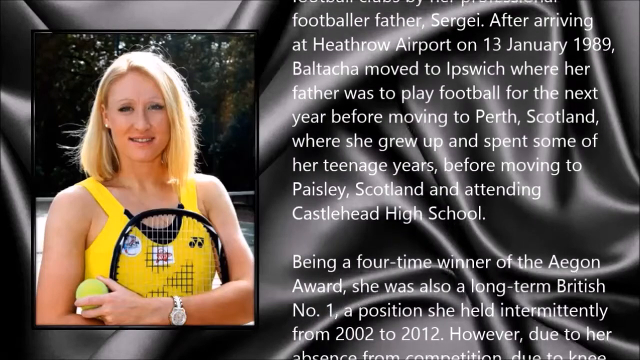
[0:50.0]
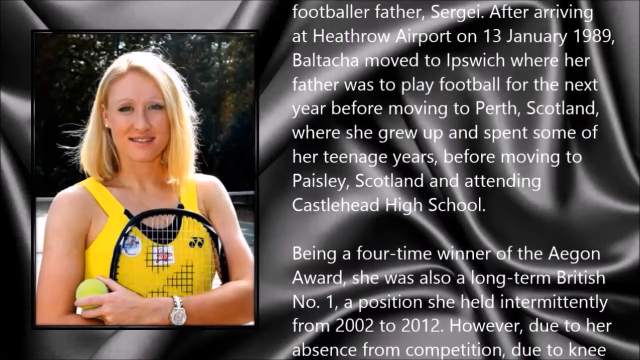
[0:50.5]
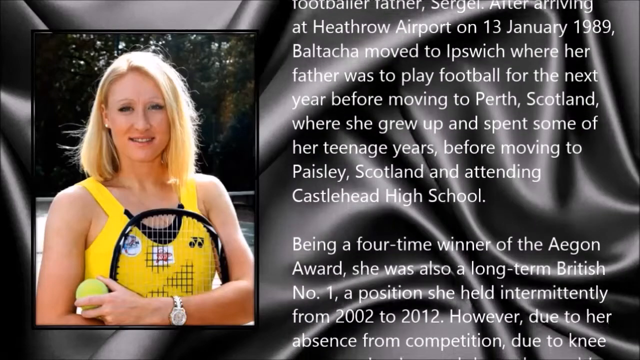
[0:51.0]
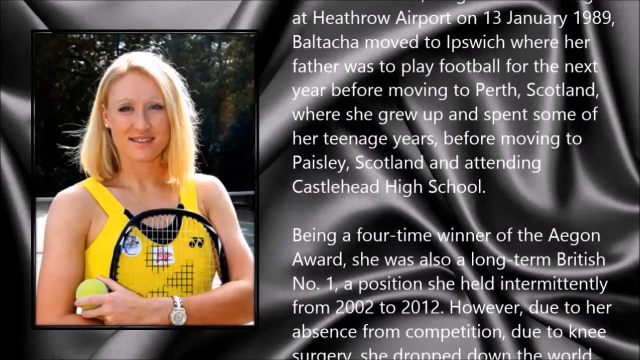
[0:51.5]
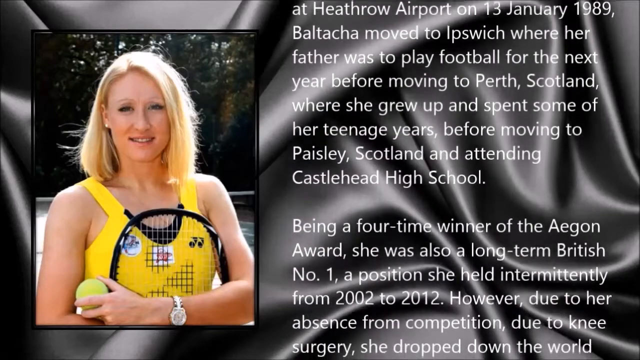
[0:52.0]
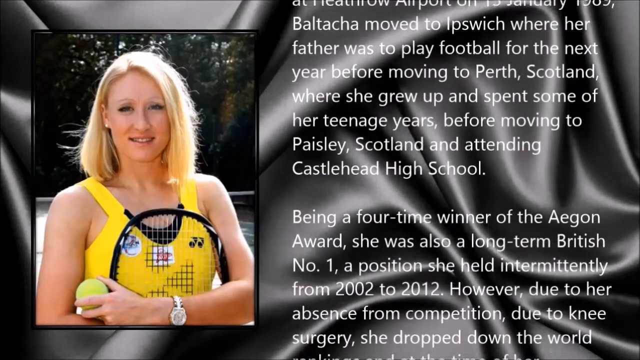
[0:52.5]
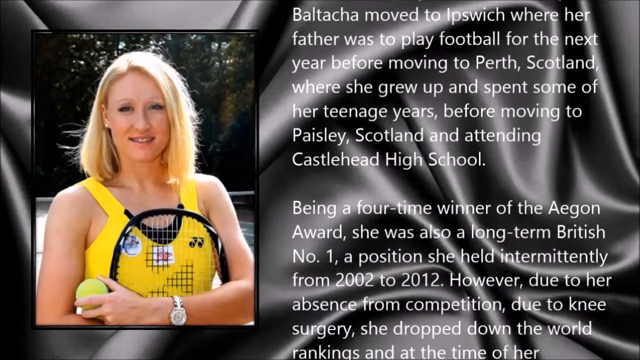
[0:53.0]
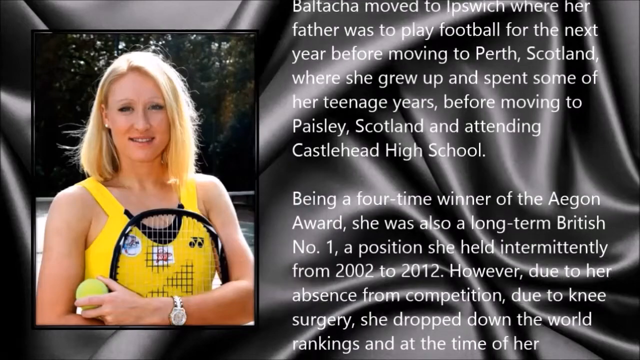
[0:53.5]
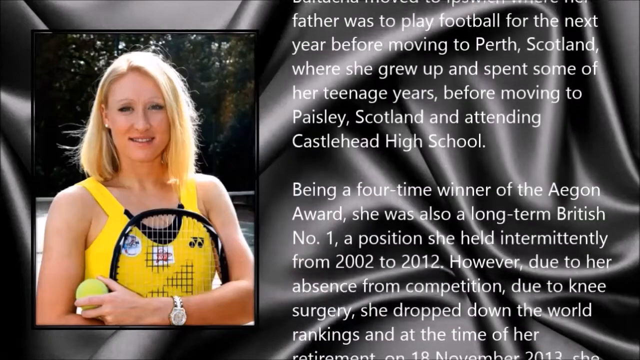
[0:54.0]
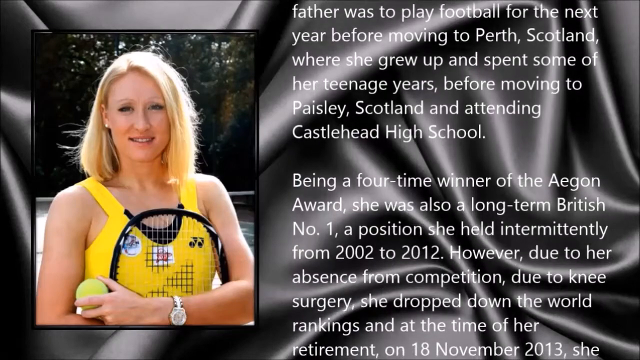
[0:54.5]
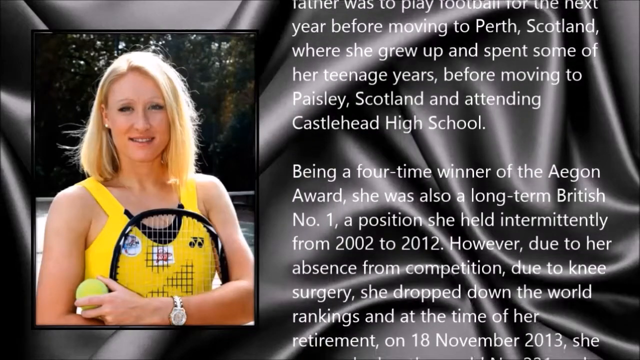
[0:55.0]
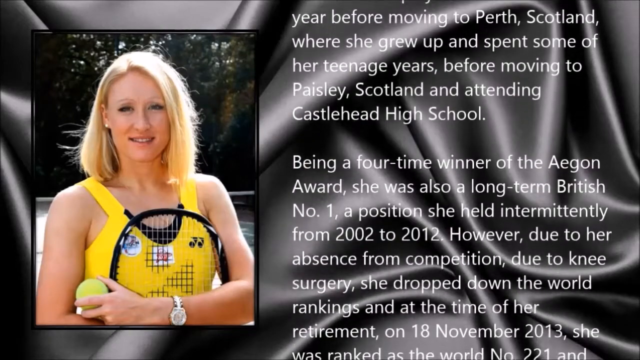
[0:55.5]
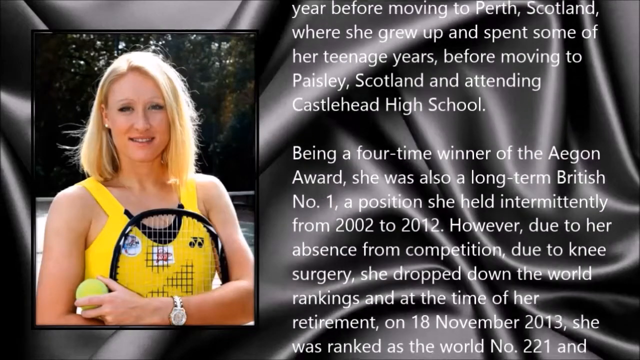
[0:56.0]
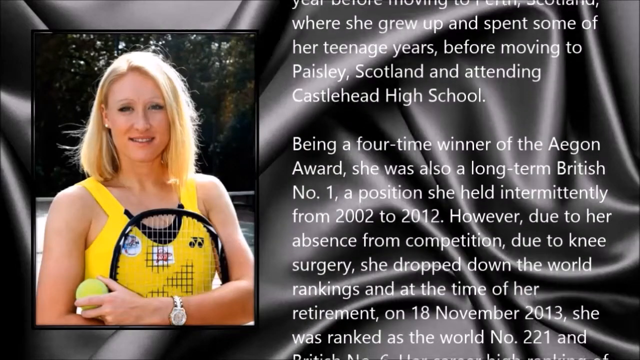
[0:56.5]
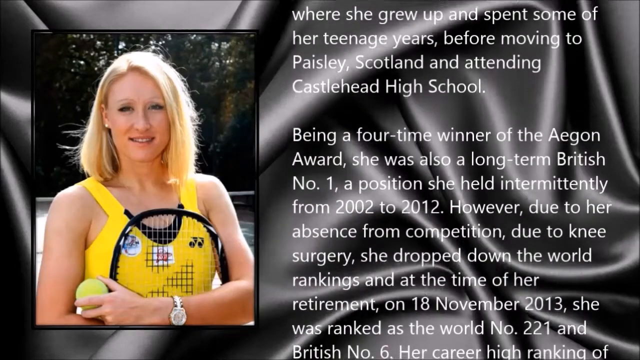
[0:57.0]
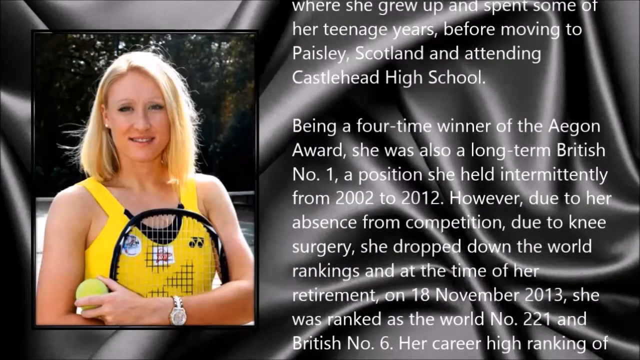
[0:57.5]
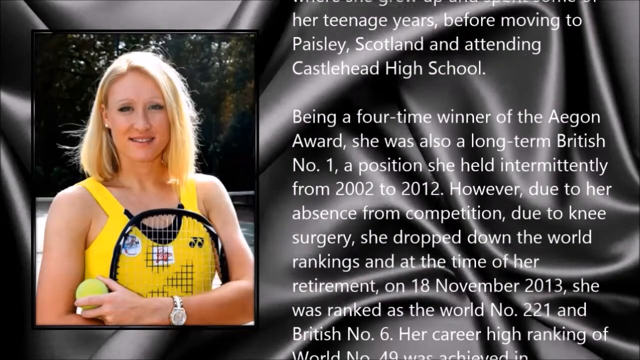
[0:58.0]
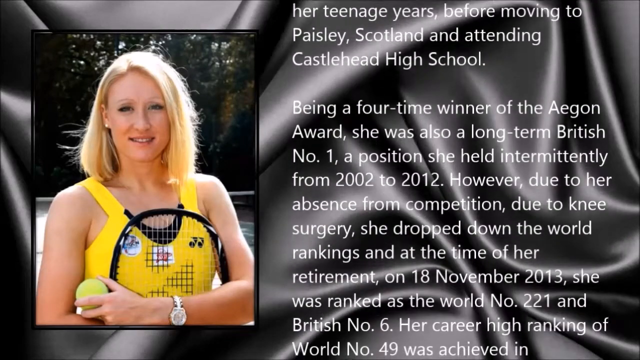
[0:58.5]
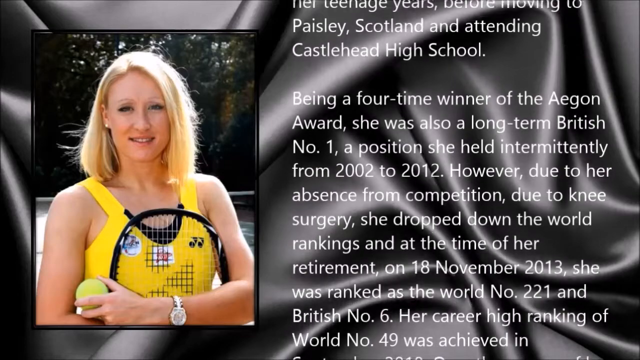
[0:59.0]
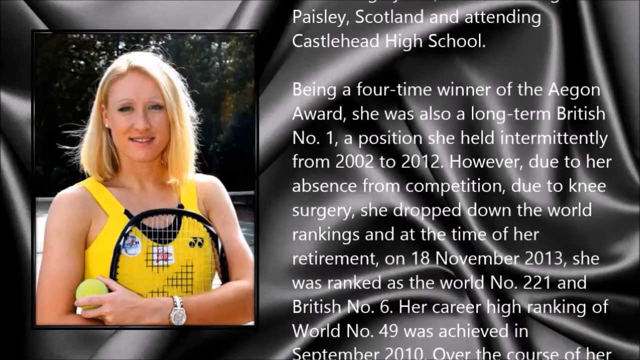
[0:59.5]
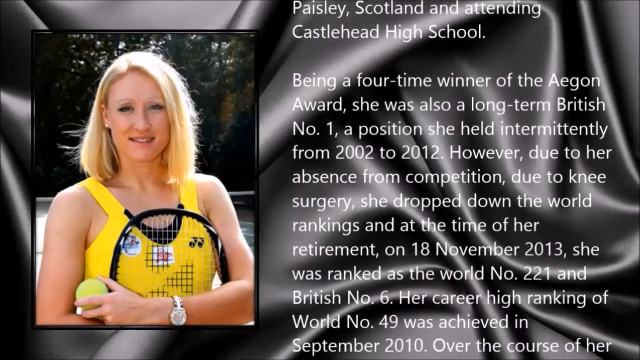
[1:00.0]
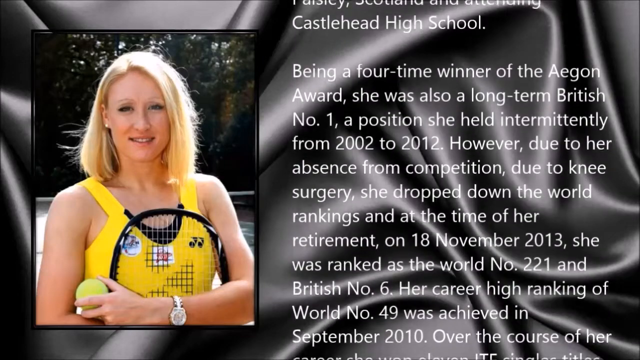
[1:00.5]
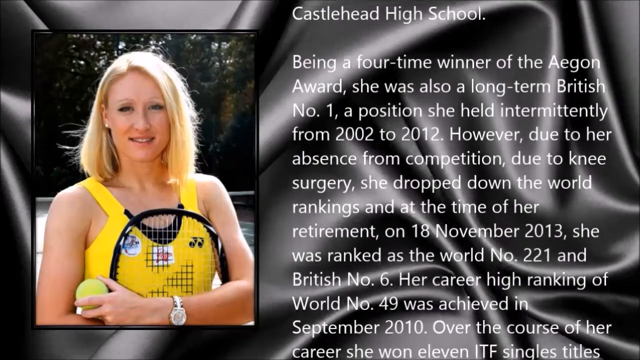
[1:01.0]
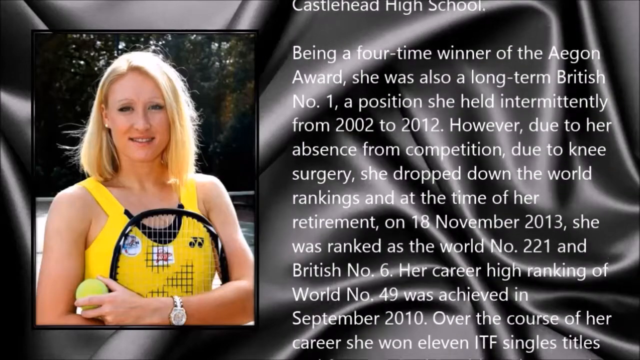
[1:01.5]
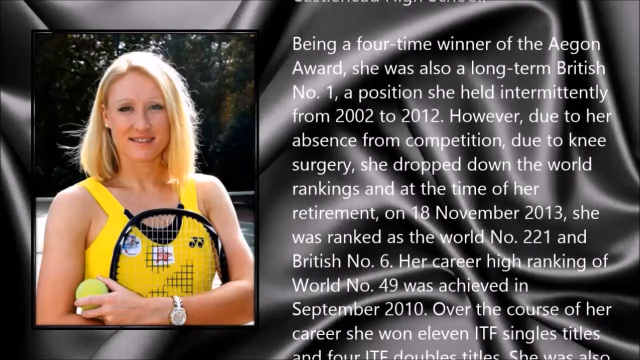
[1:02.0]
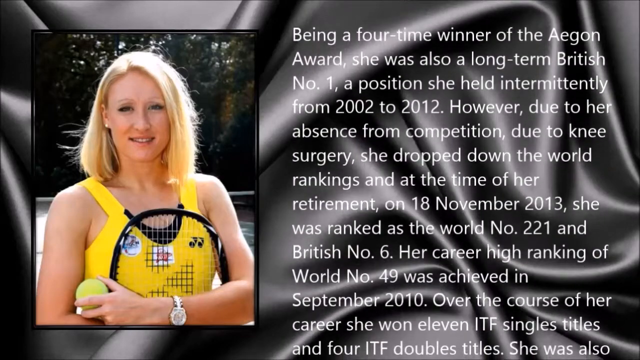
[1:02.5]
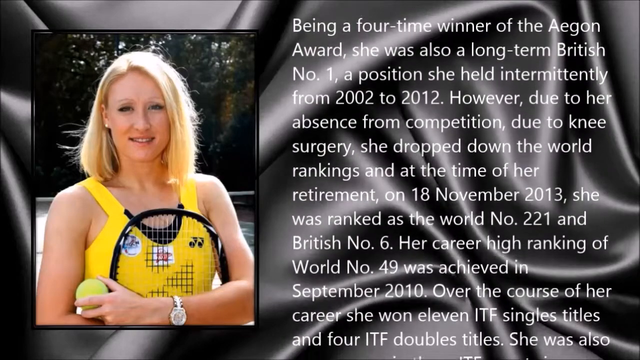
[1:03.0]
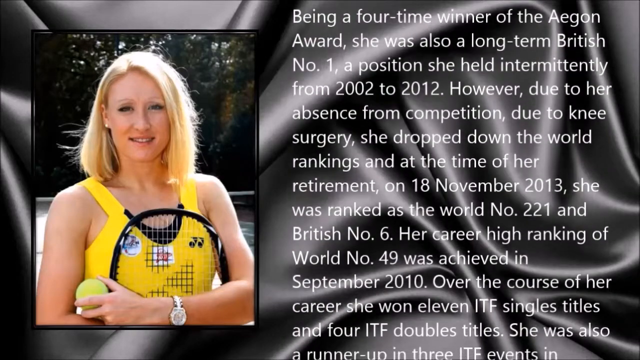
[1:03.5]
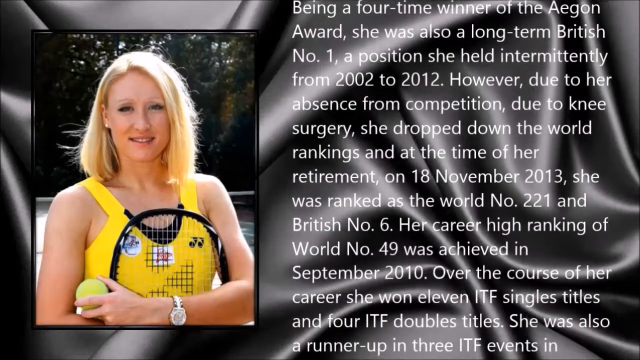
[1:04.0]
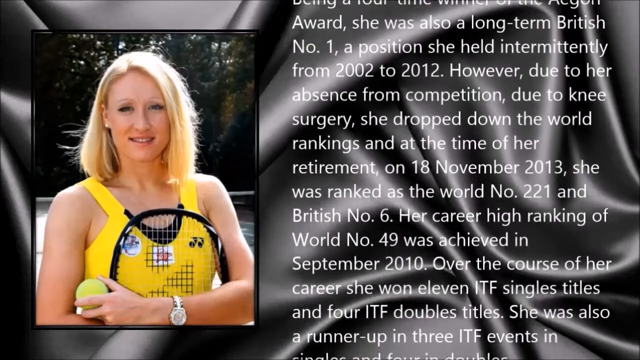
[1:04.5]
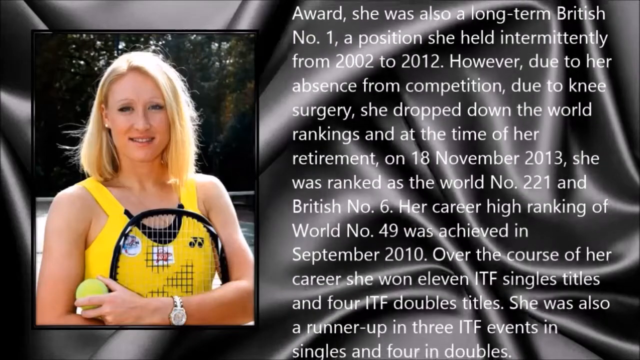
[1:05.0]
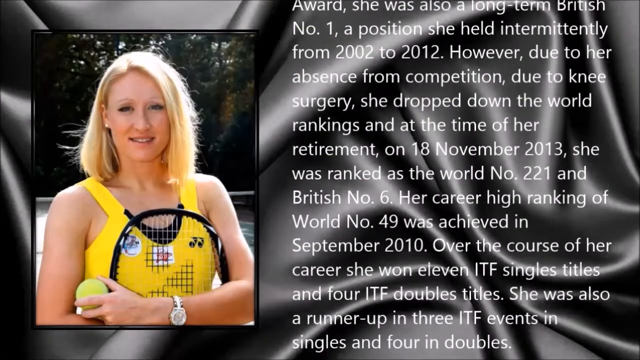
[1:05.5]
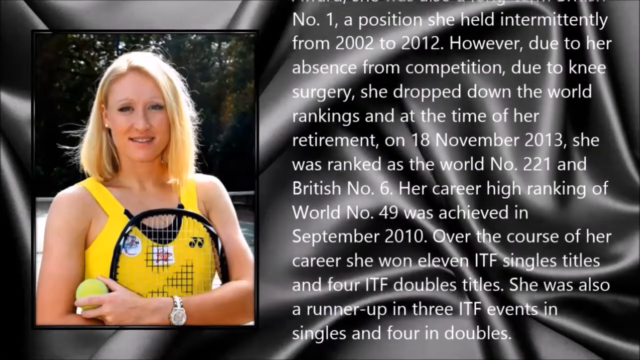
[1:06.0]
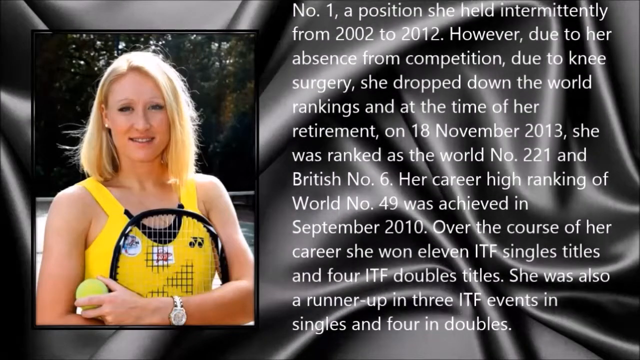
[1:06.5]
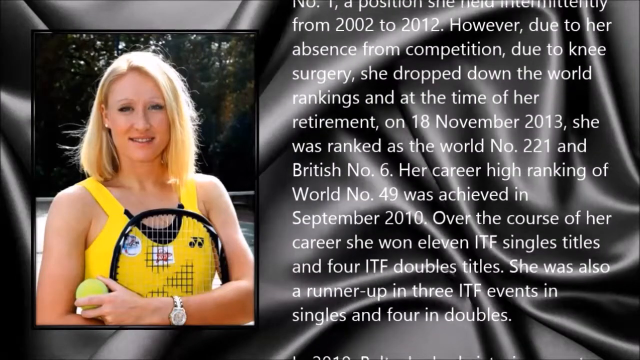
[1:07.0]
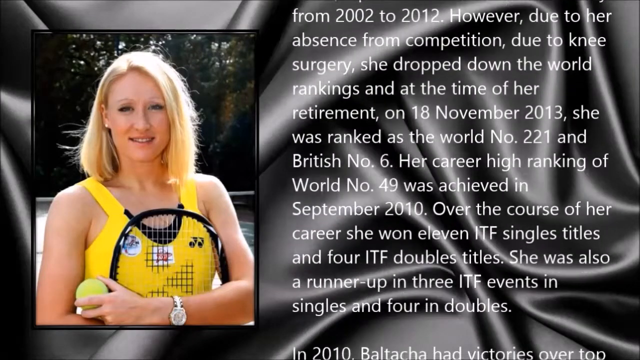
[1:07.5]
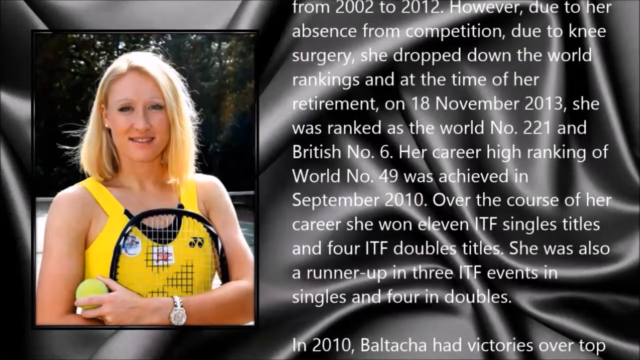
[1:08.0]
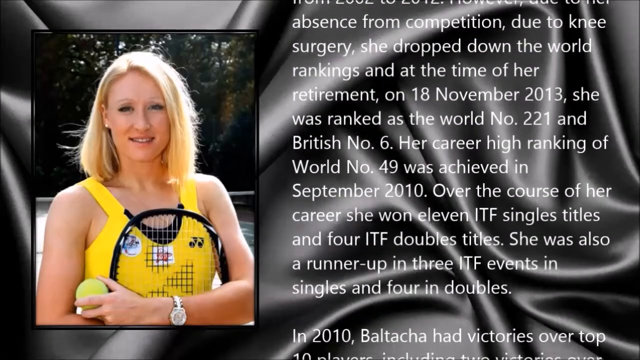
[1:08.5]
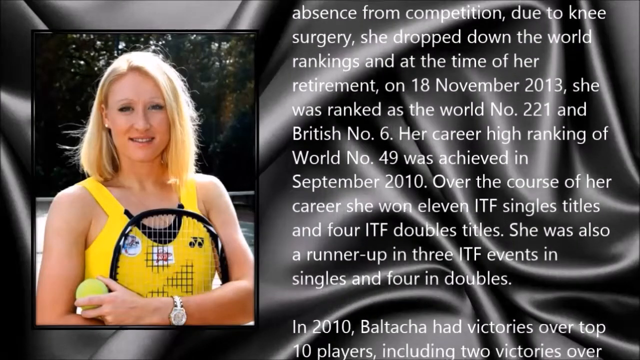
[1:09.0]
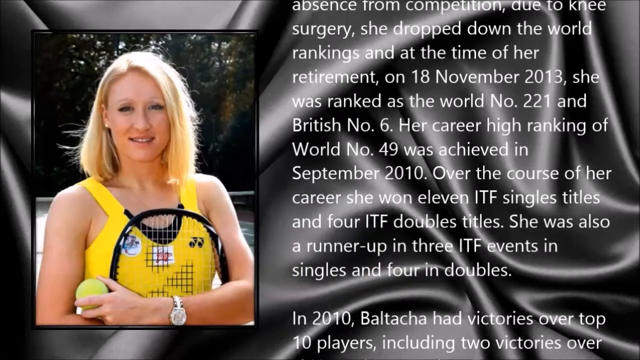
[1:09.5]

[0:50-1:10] The screen looks like a piece of black silk fabric with wrinkles in it. On the left side is a picture of a blonde woman in a yellow tank top holding a black tennis racket up to her chest, her arm crossed over her chest and the racket, and a tennis ball in her left hand. Behind her are trees and forest. To the right of her, text scrolls up from the bottom: "Being a four time winner of the Aegon Award, she was also a long term British number one, a position she held intermittently from 2002 to 2012. However, due to her absence from competition due to knee surgery, she dropped down the world rankings and at the time of her retirement on 18 November 2013, she was ranked as the world number 221 and British number 6. Her career high ranking of world number 49 was achieved in September 2010. Over the course of her career she won 11 ITF singles titles and 4 ITF double titles. She was also a runner up in 3 ITF events in singles and 4 in doubles."